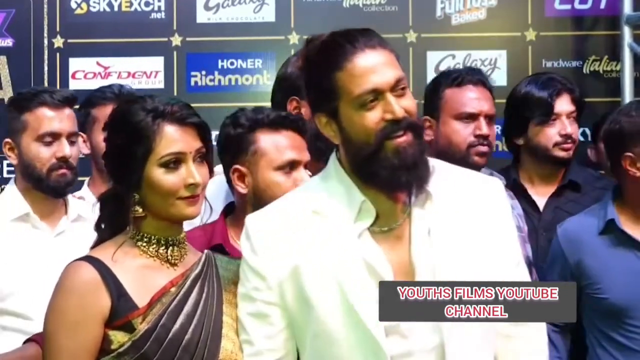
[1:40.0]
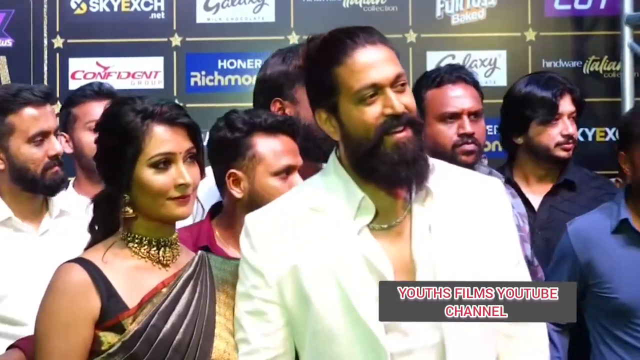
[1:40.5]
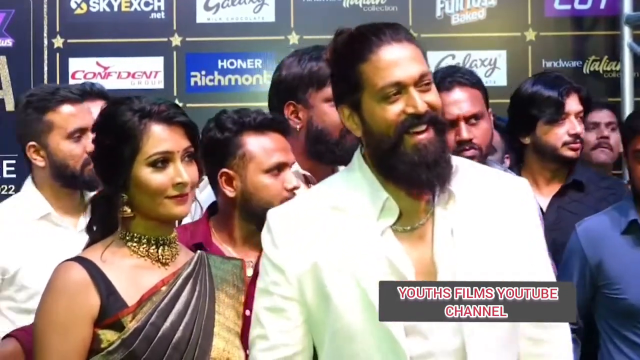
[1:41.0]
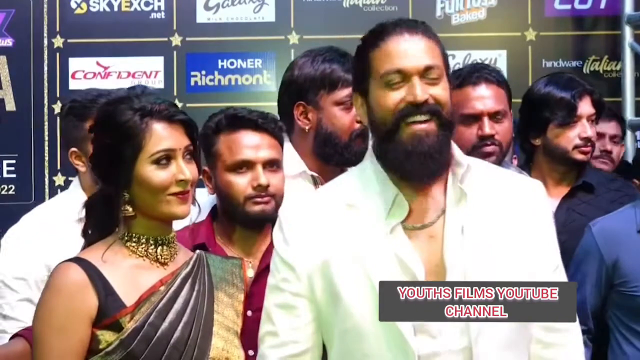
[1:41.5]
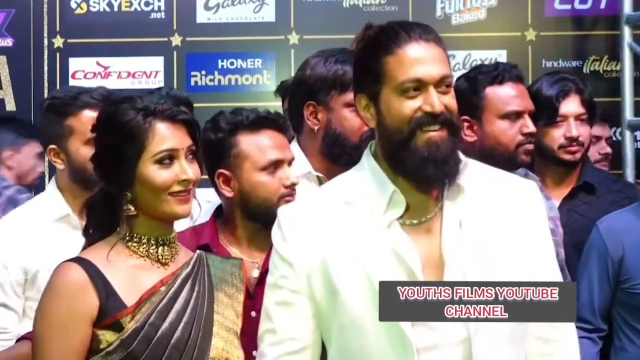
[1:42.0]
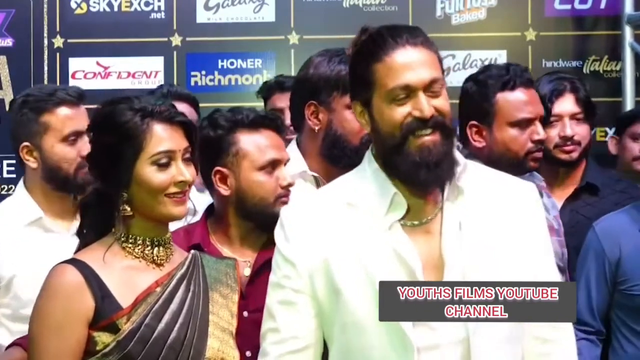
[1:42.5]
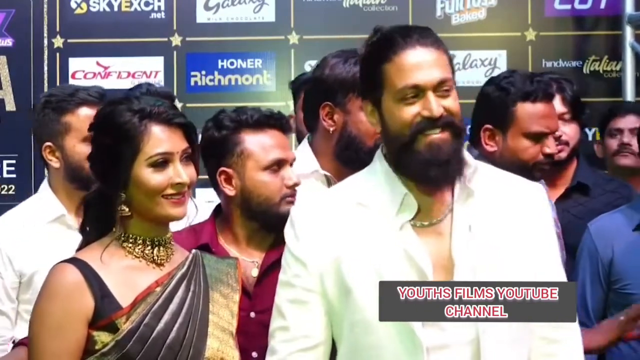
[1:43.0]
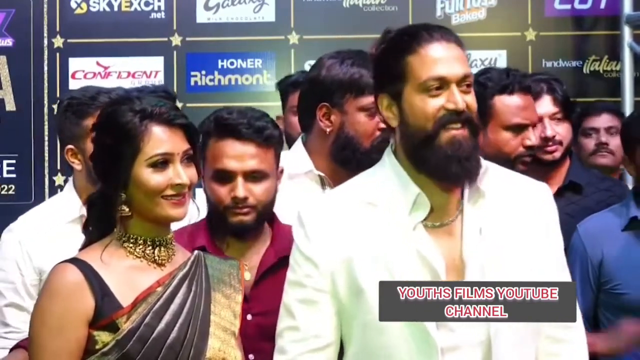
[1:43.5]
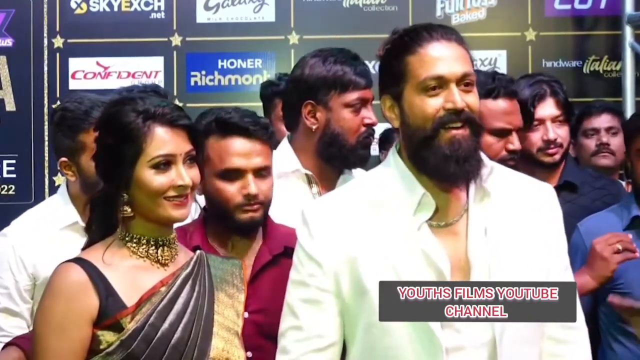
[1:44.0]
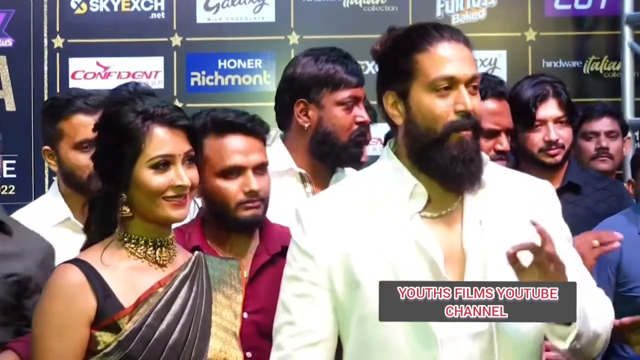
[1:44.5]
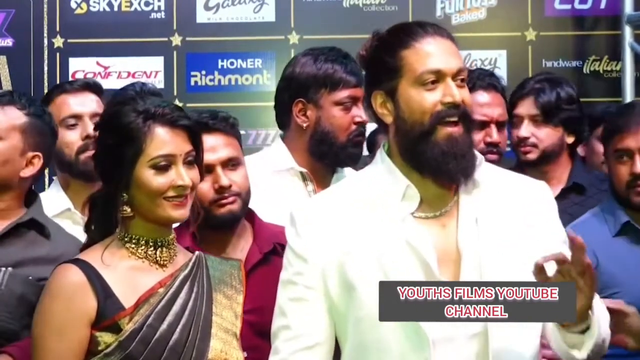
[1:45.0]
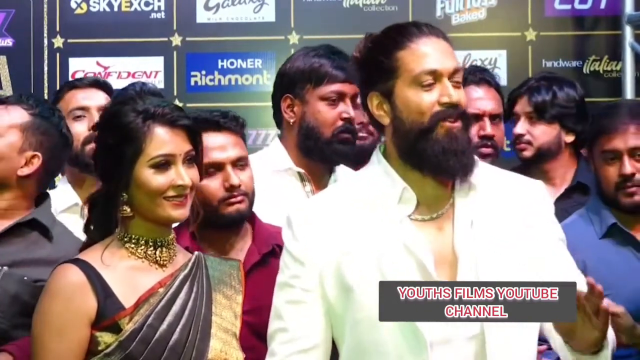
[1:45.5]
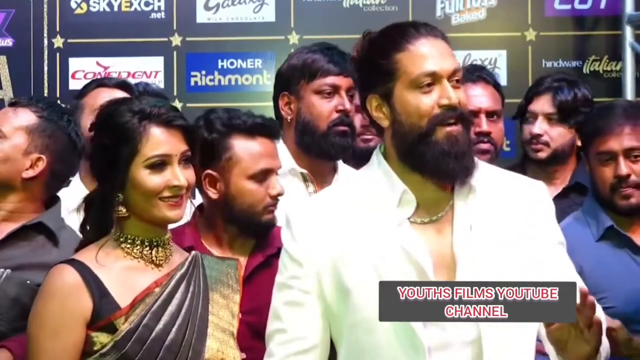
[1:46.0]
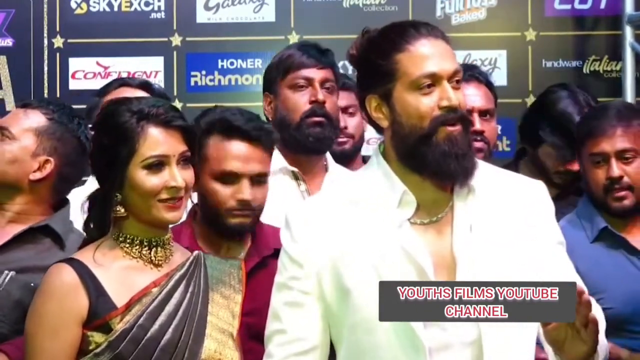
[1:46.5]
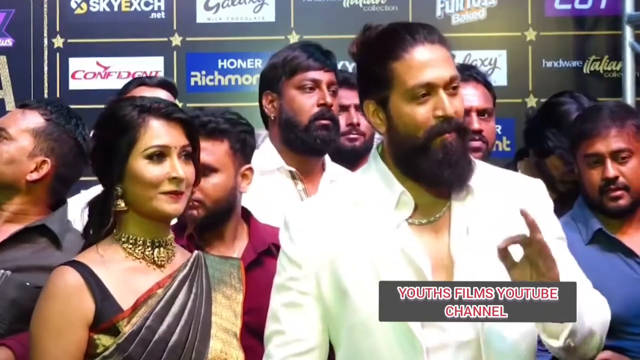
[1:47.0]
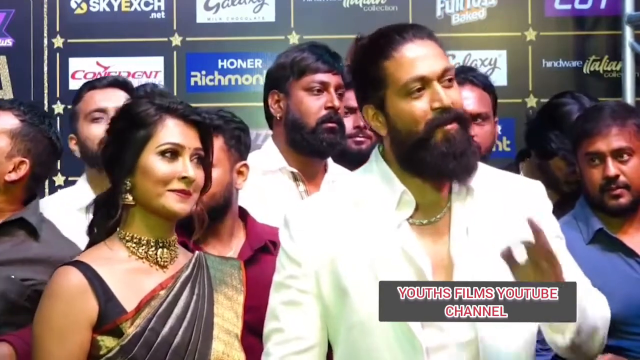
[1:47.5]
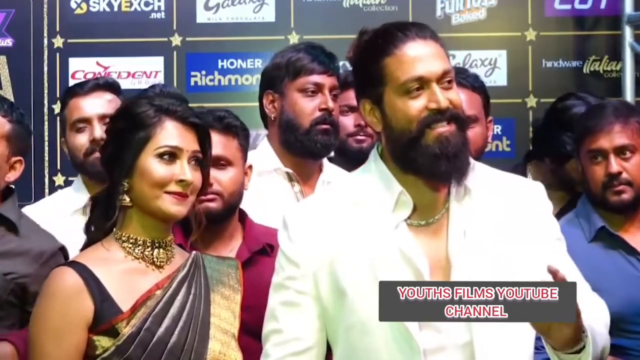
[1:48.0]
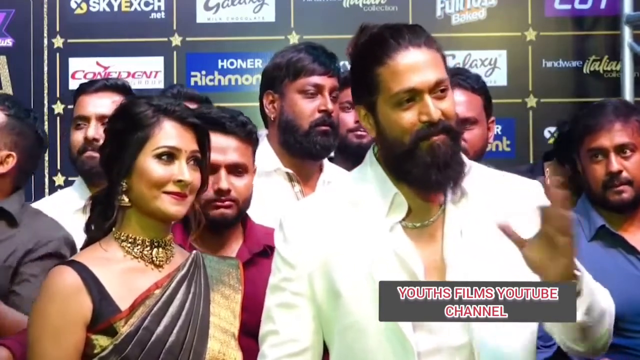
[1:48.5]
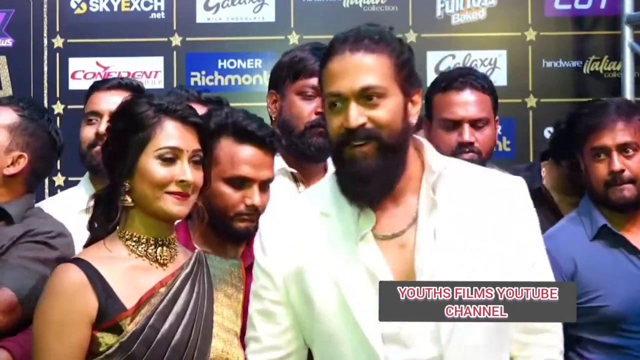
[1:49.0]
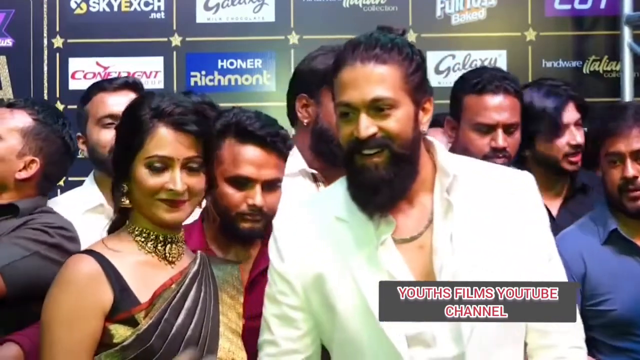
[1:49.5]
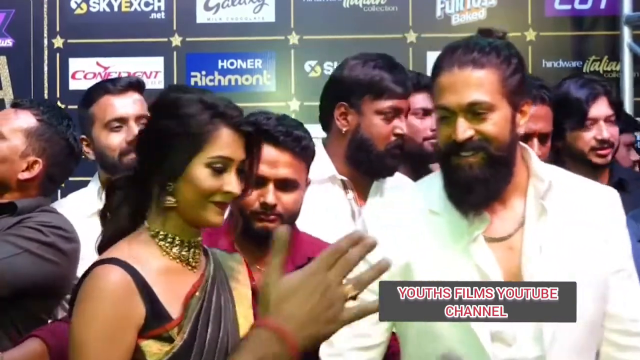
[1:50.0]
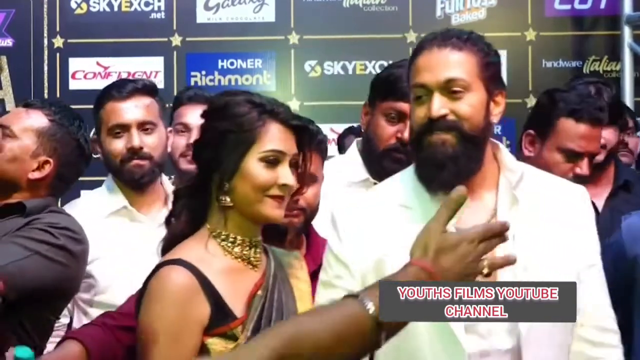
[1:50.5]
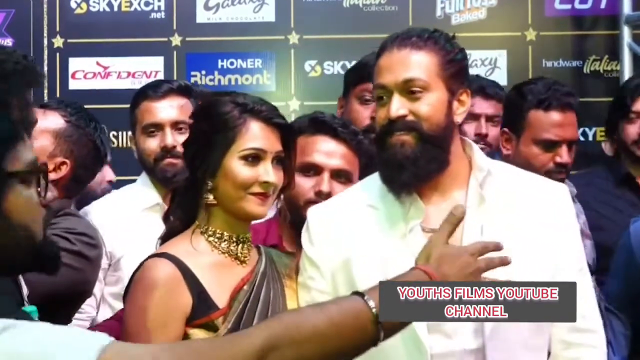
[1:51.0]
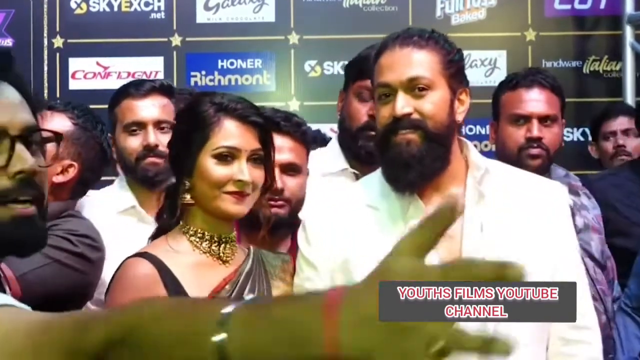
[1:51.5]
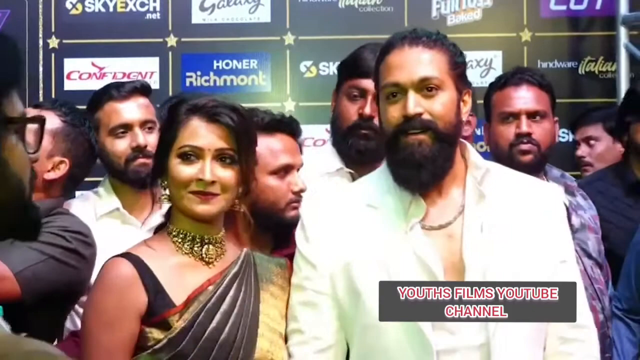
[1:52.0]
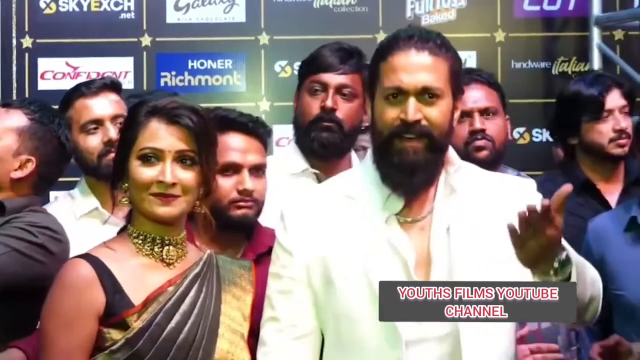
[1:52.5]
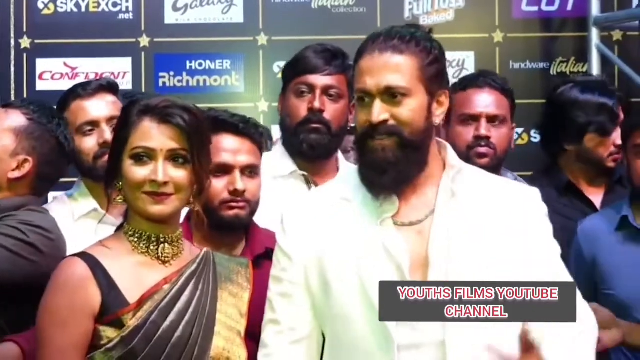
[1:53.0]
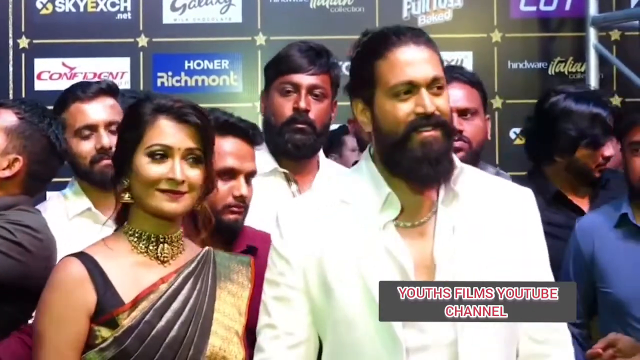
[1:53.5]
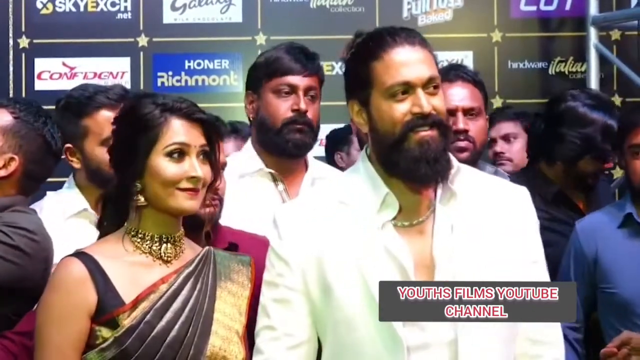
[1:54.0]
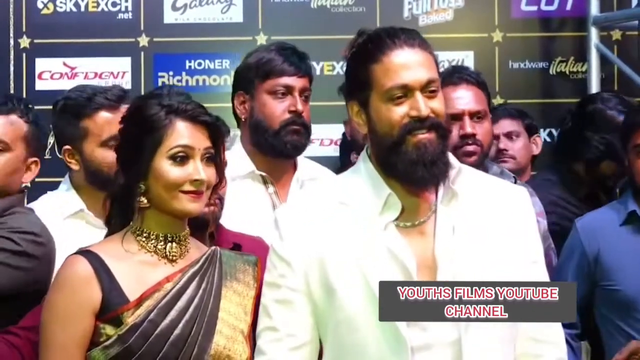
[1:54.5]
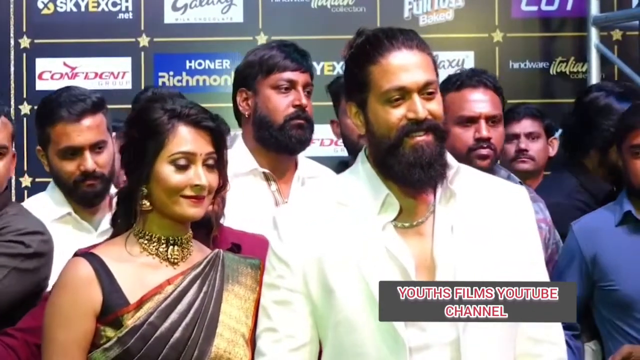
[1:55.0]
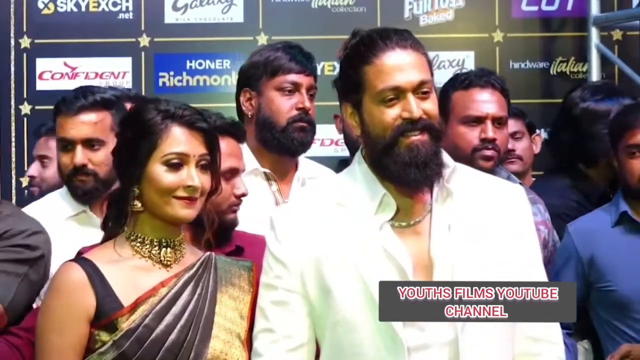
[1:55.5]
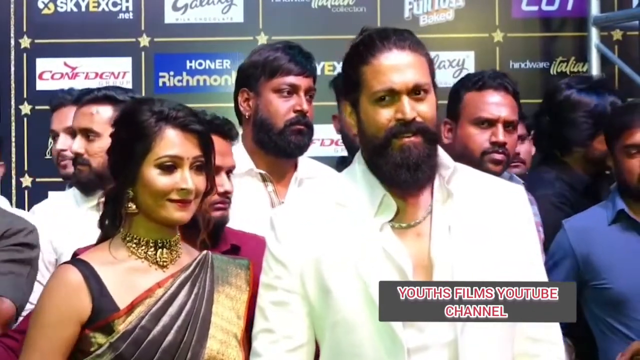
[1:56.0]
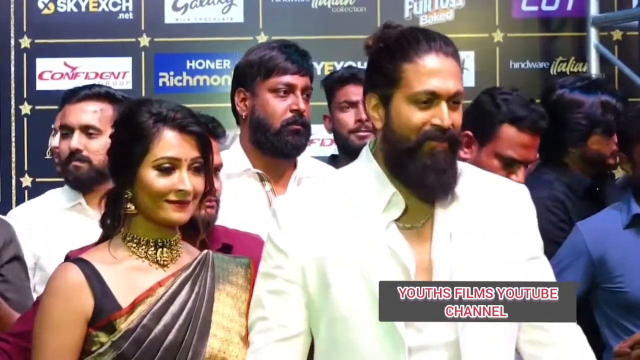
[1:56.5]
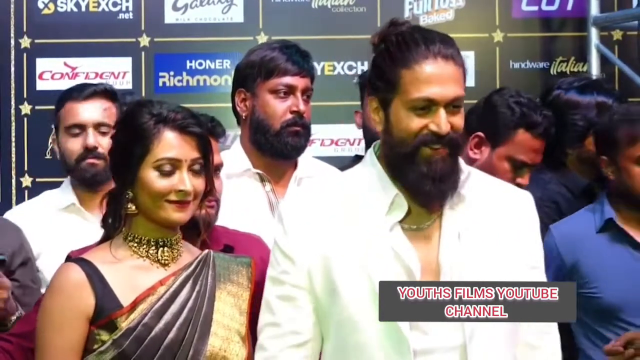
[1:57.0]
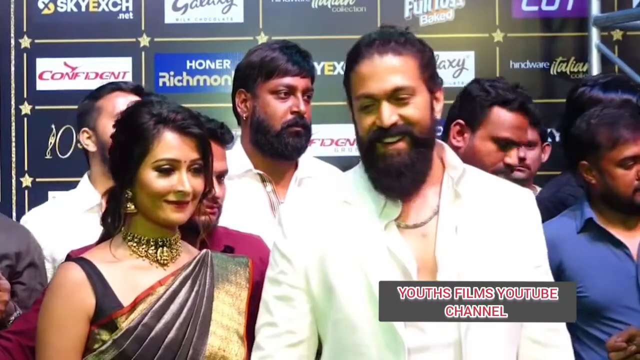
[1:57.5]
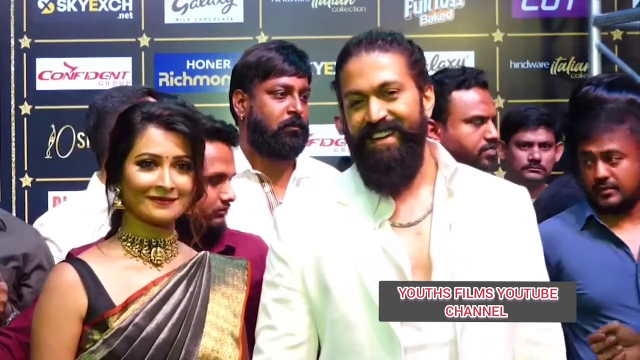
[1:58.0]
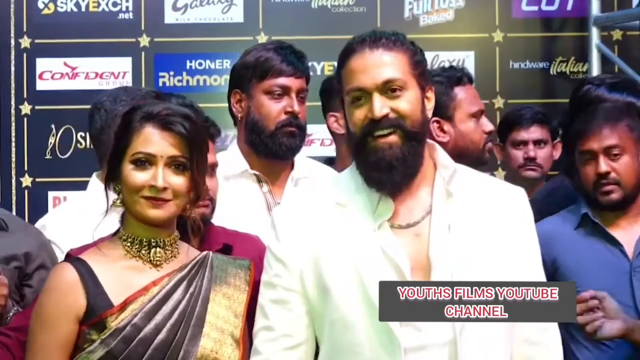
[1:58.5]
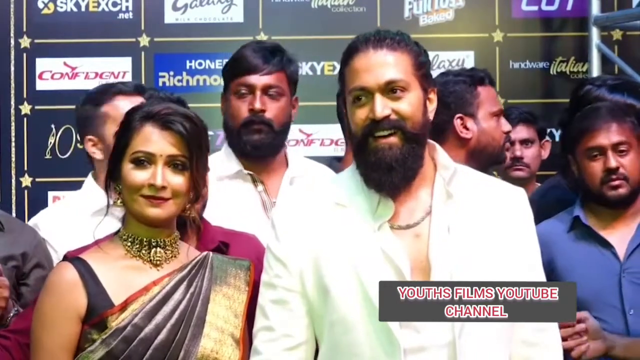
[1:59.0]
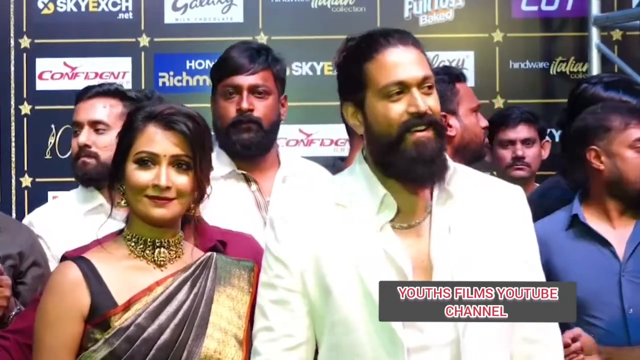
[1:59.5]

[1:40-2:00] The couple is interviewed at some kind of event. The man is very animated as he speaks, smiling and answering questions from the journalists, gesturing with his hands and nodding. He wears a white suit and a gold chain, looks to be maybe in his early 30s, and has a pretty full beard and dark hair tied up into a bun. The woman wears a brownish, gray and gold sari, along with gold jewelry: a choker-style necklace and bell-shaped gold earrings. A crowd of people is gathered all around and behind them, appearing to be additional journalists and press, or maybe people helping to keep some distance from the general public. Behind them is a light-up screen with logos from different companies, reading things like "Galaxy Honor Richmond Sky X Confident group".